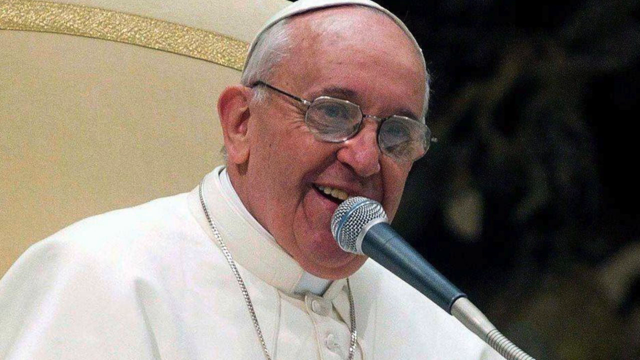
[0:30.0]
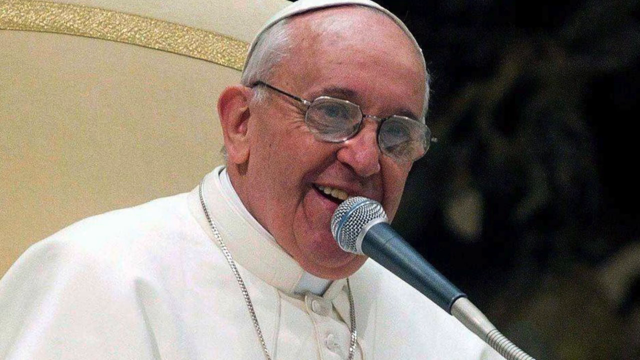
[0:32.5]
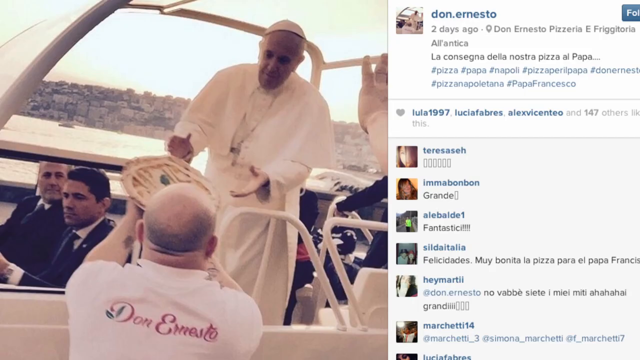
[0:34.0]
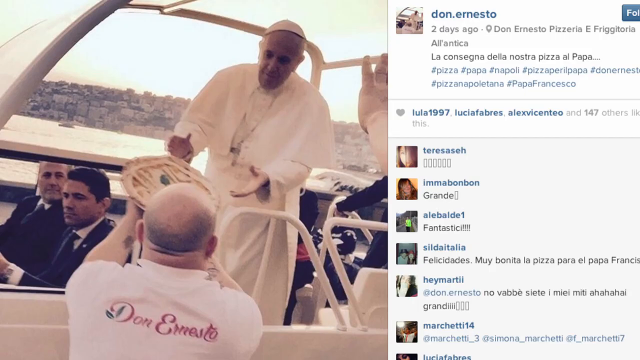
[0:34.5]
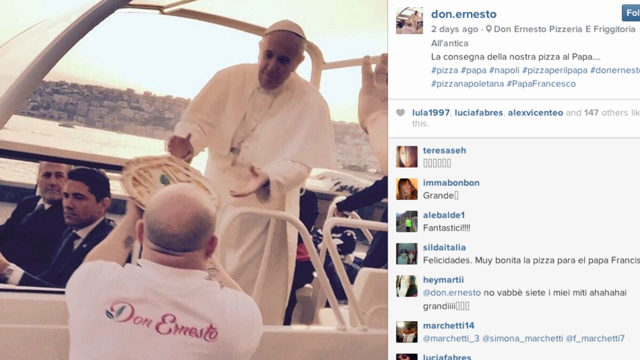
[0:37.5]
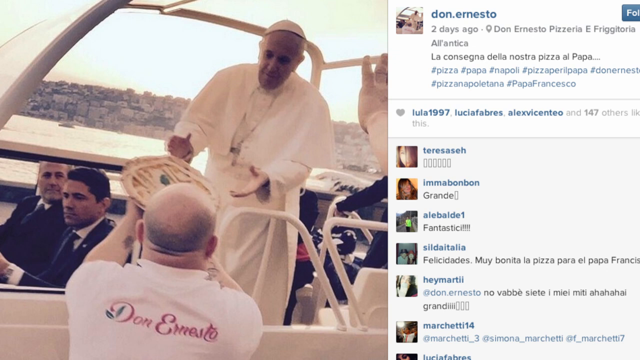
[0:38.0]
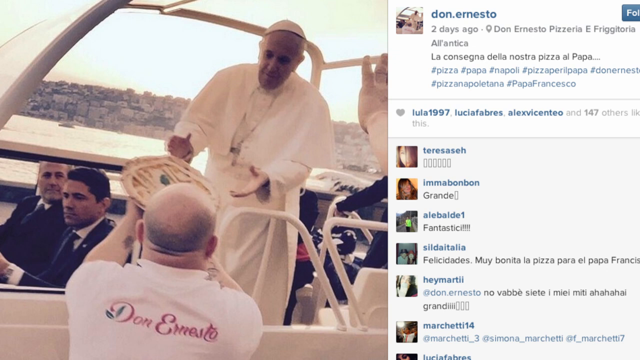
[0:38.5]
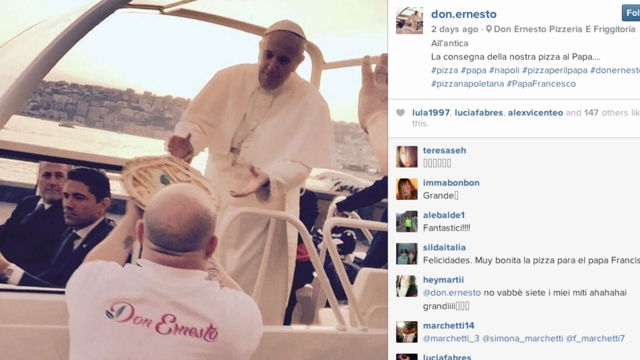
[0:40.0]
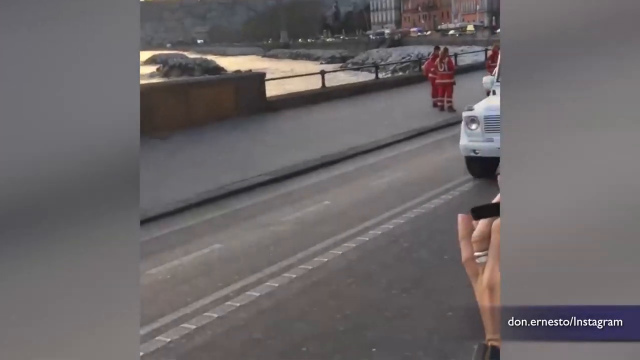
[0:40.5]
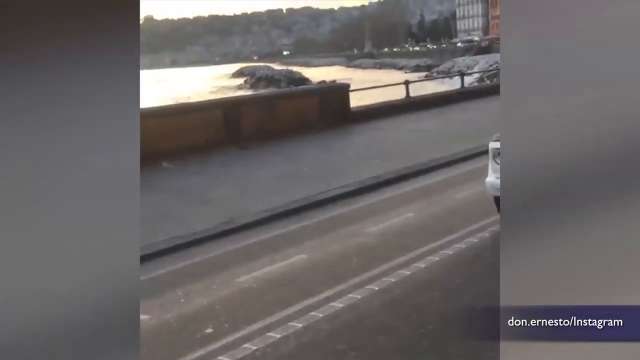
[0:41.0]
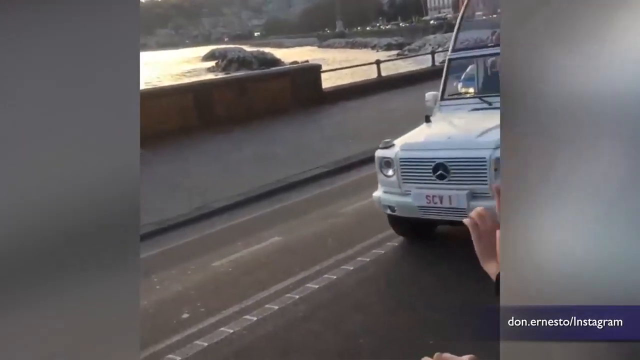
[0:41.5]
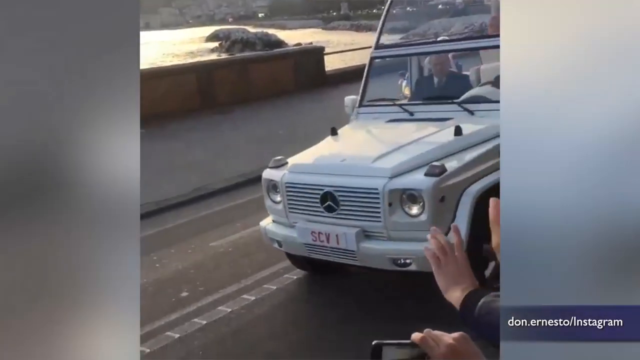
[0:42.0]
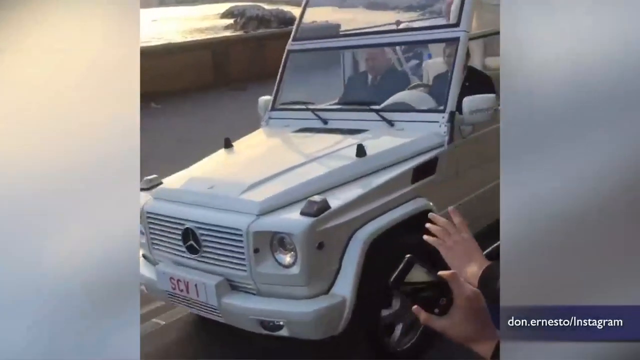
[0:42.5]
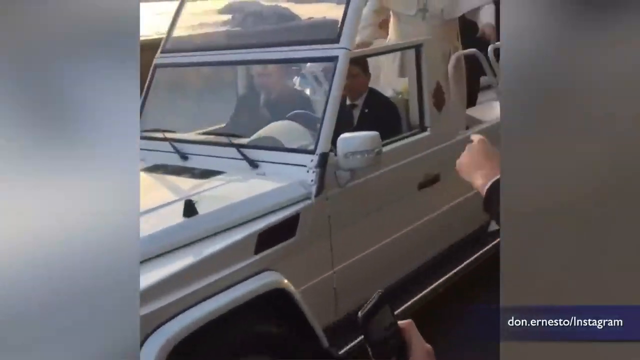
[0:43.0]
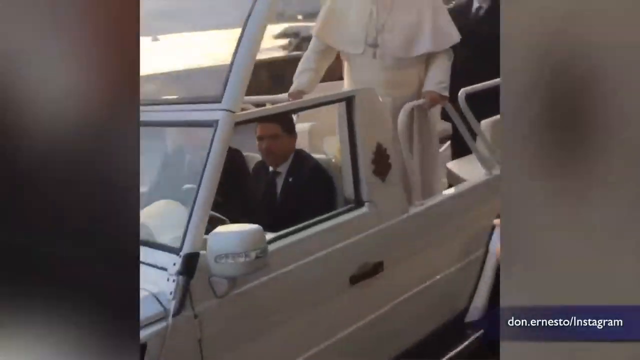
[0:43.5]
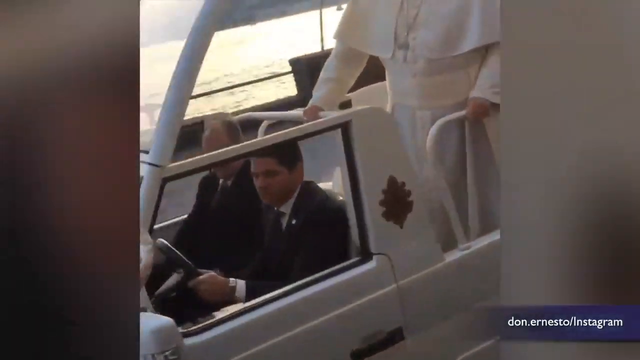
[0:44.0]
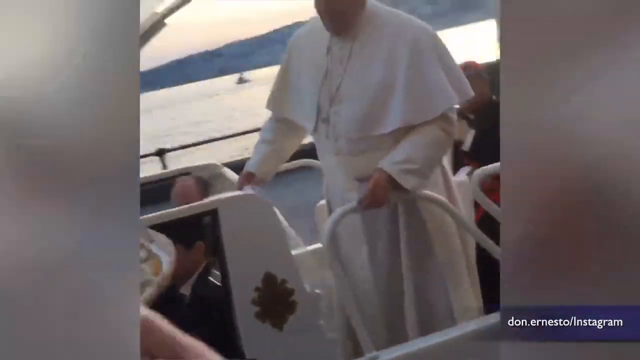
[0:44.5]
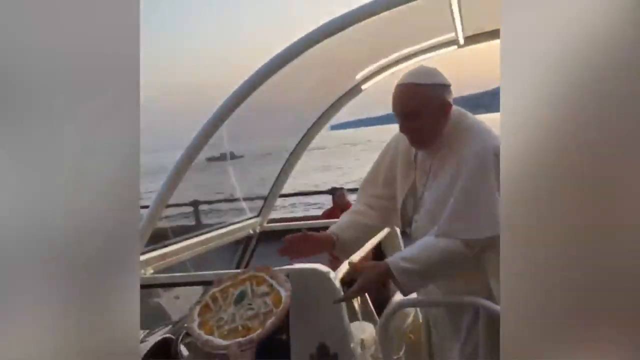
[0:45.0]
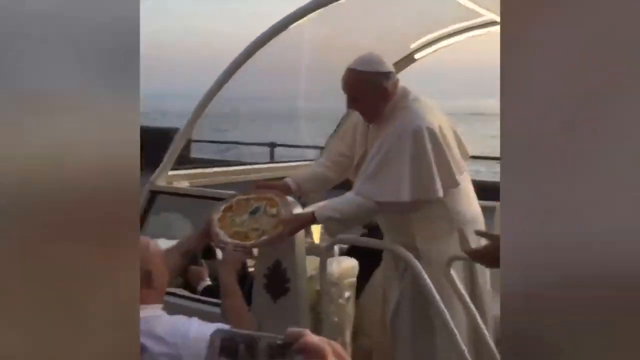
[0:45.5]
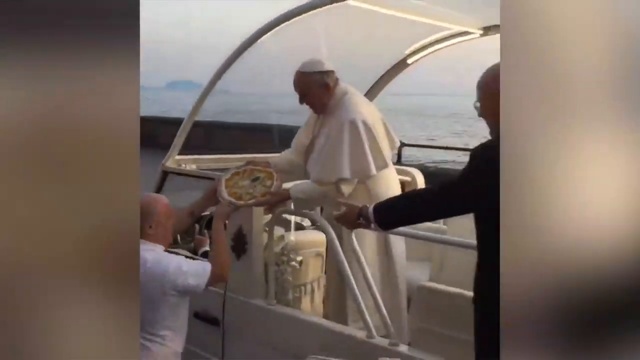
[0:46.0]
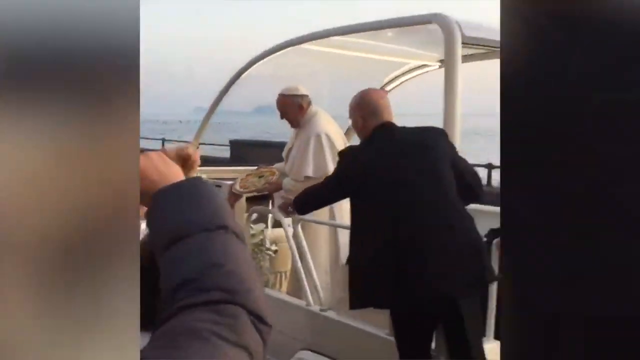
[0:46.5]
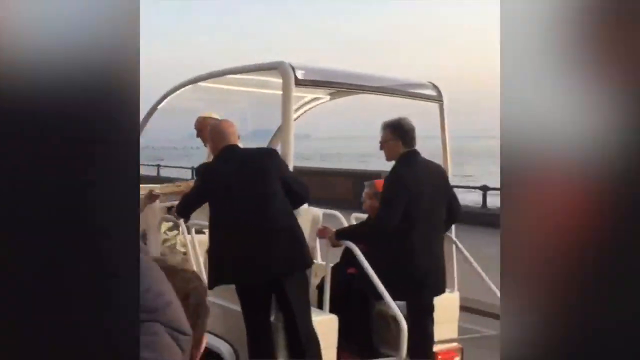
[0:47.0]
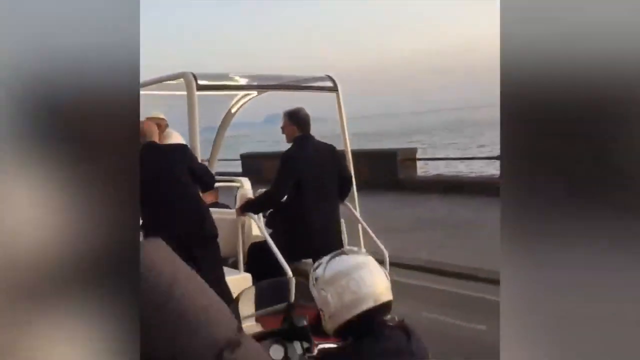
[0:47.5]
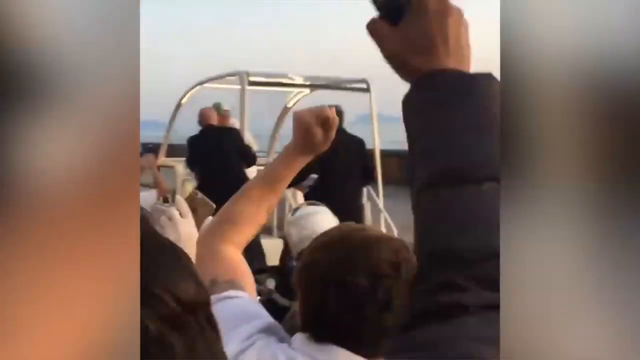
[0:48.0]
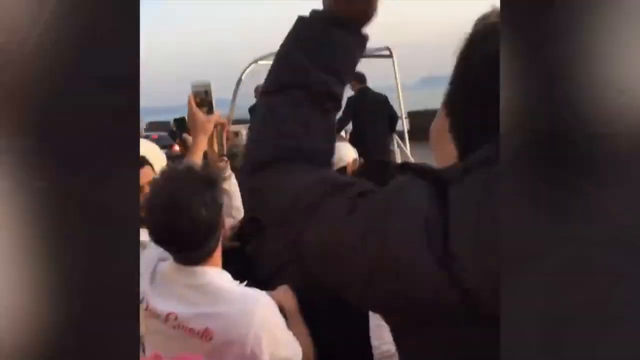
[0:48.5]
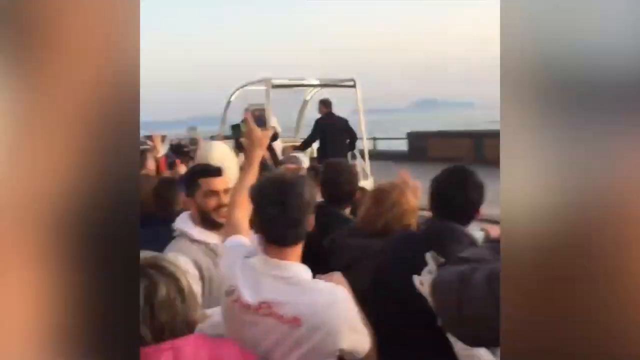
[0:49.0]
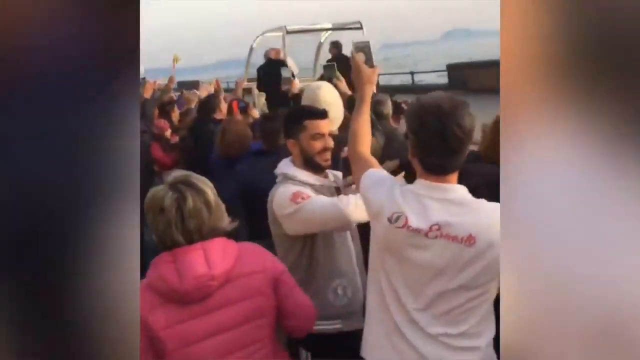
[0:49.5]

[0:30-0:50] The picture shows the Pope wearing white clothes, a cross necklace and glasses, standing in front of a mic. The same scene of the Pope in the car is then shown again: a person hands the Pope a pizza, and males in black suits with white shirts underneath ride in the car with him. On the roadside a group of people cheers, happy for the Pope, as he passes along the street in the Mercedes, and other people take pictures.